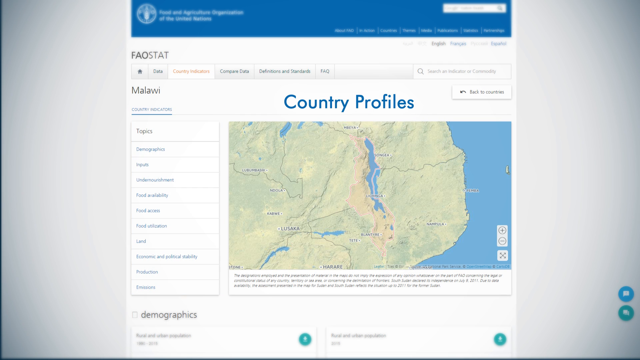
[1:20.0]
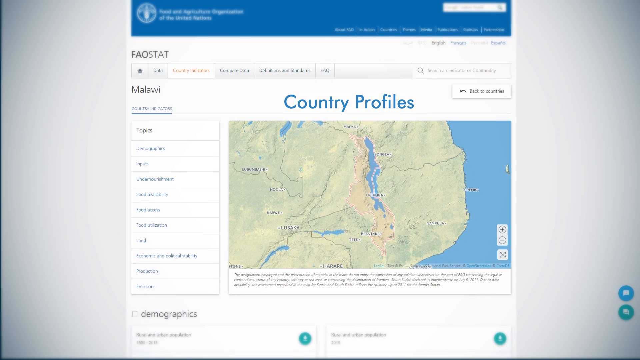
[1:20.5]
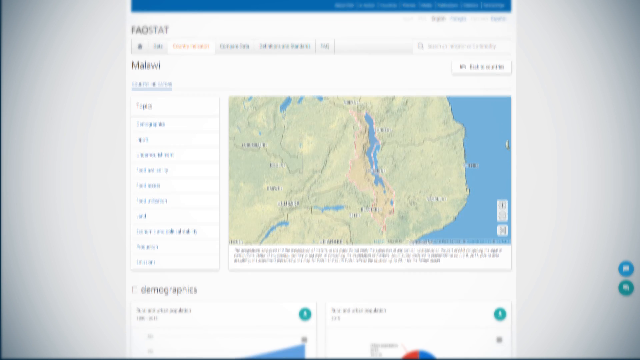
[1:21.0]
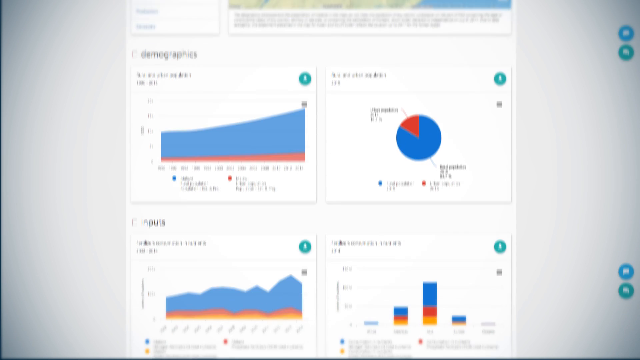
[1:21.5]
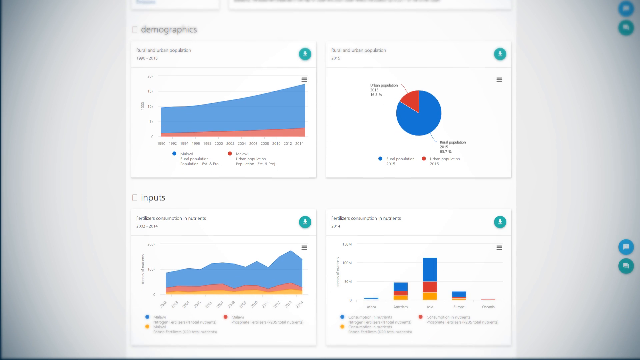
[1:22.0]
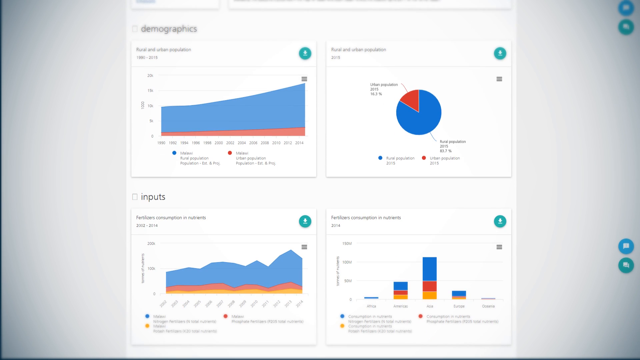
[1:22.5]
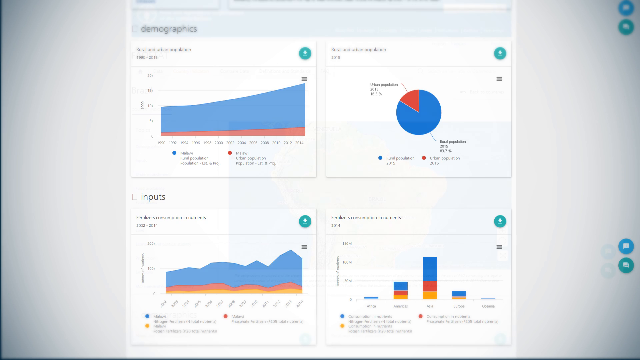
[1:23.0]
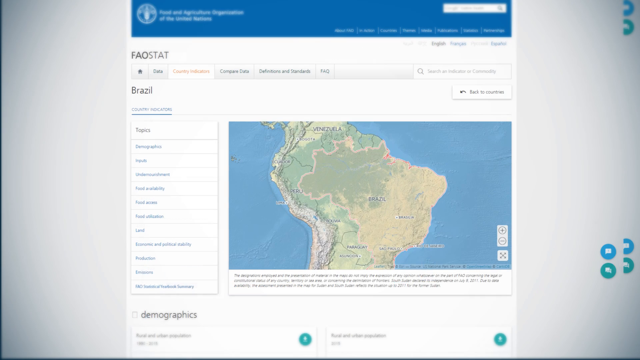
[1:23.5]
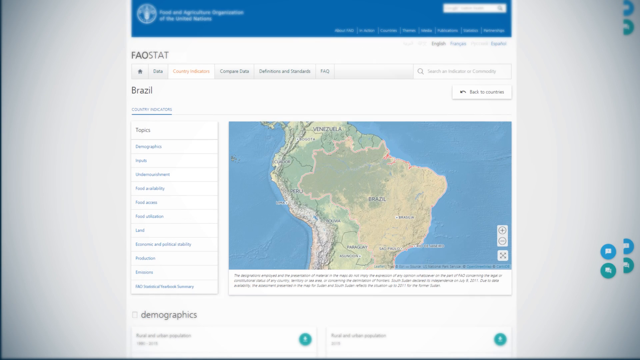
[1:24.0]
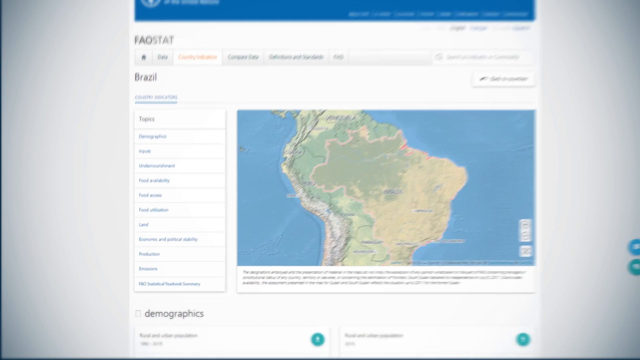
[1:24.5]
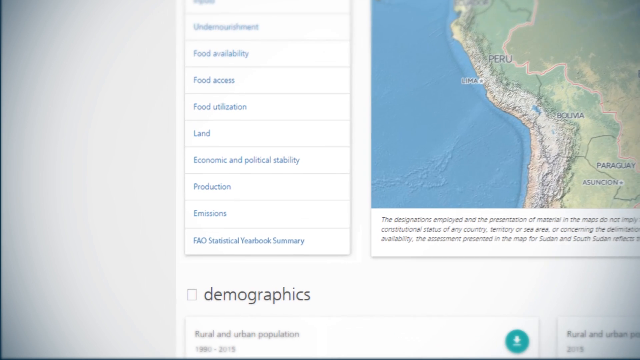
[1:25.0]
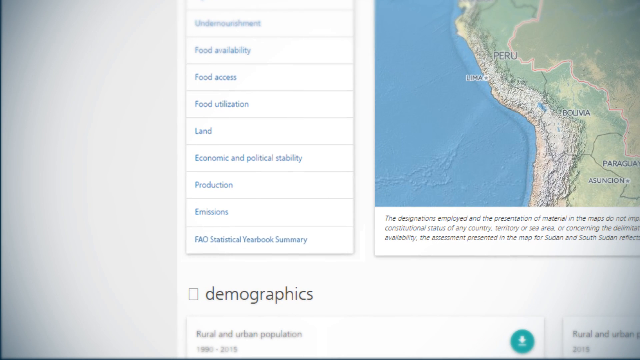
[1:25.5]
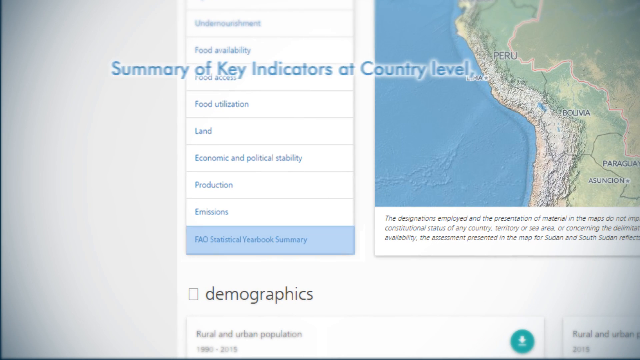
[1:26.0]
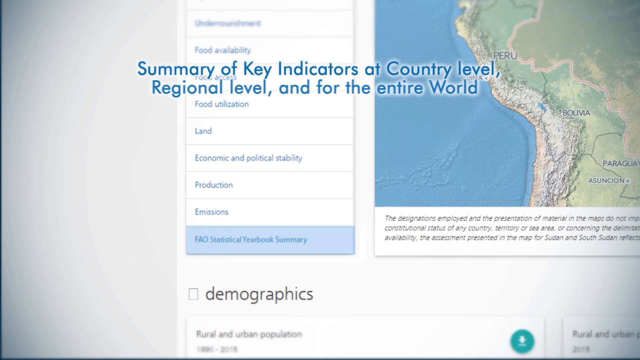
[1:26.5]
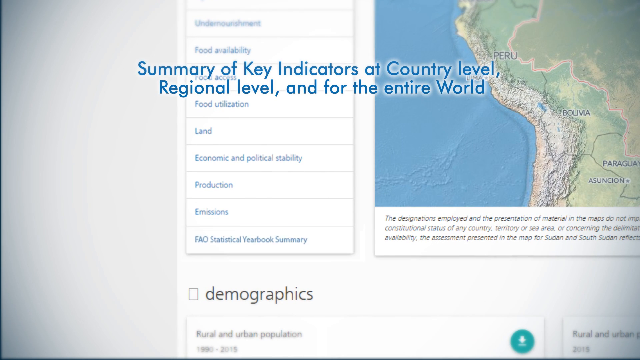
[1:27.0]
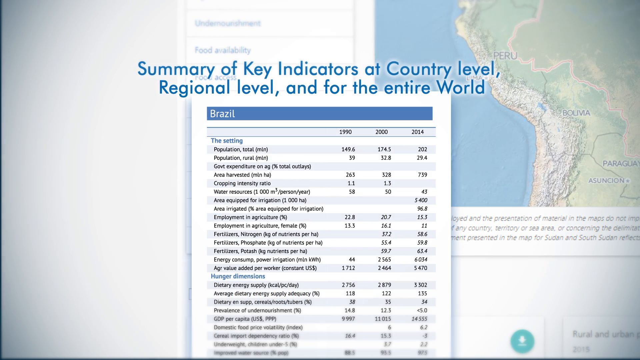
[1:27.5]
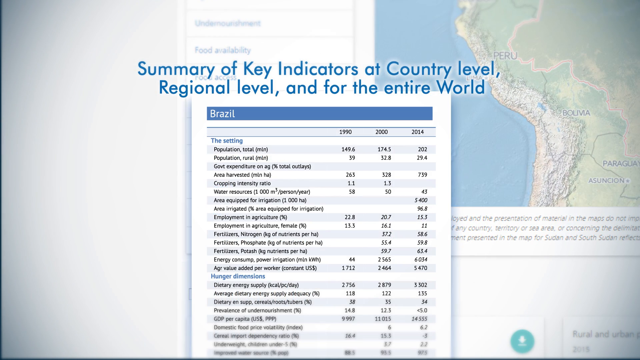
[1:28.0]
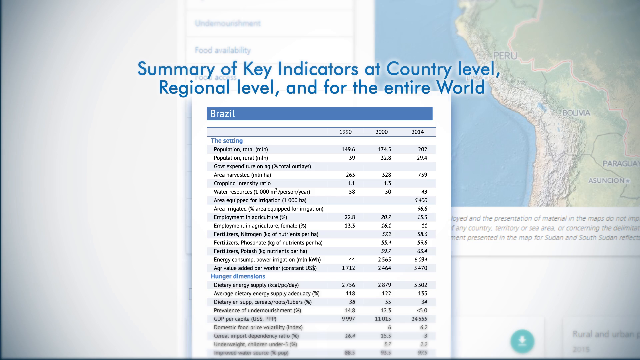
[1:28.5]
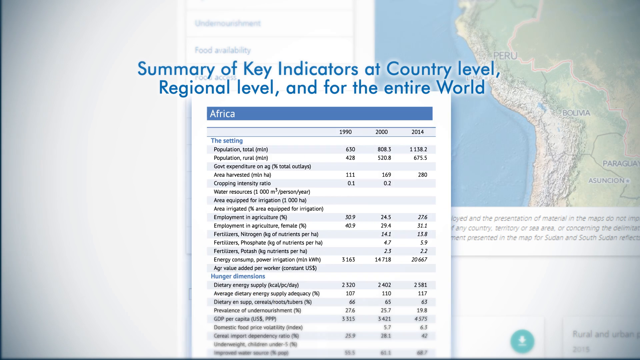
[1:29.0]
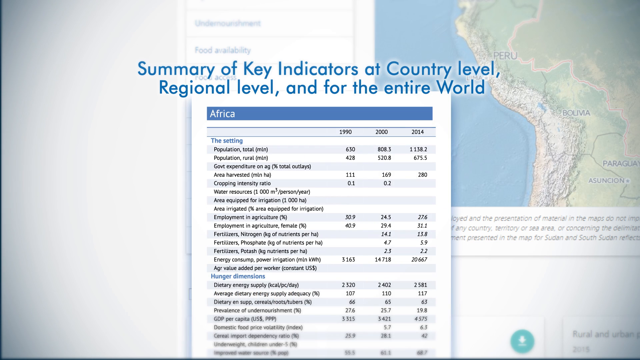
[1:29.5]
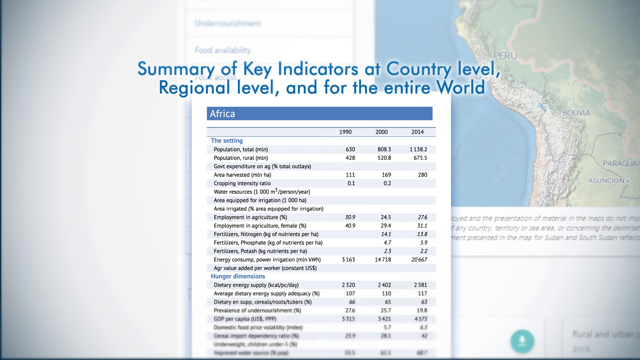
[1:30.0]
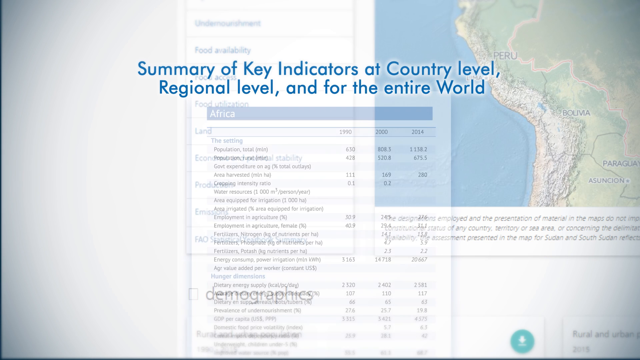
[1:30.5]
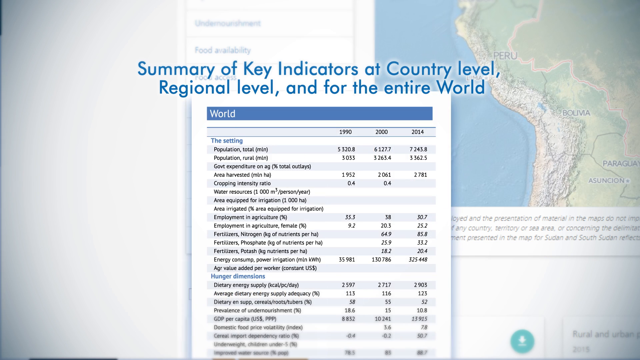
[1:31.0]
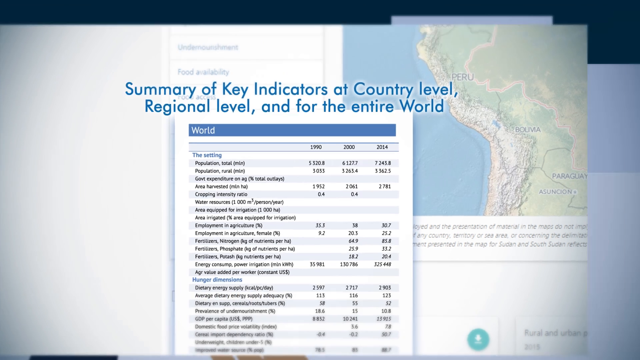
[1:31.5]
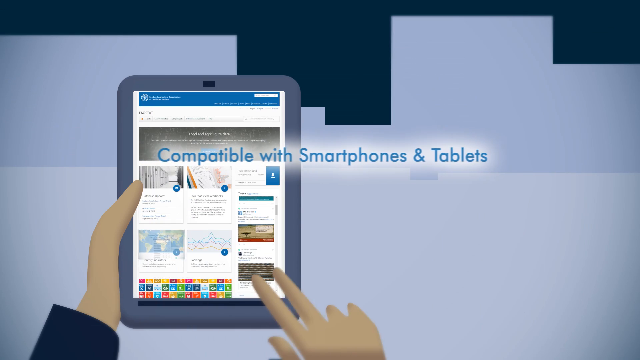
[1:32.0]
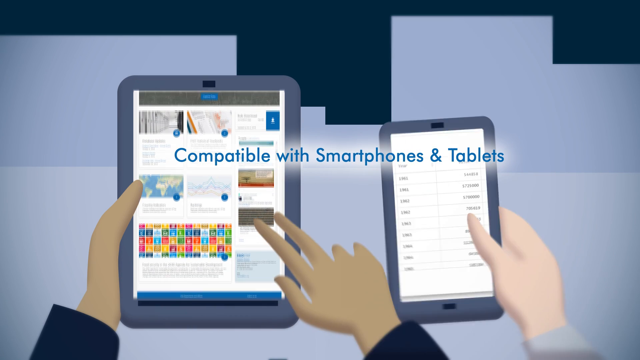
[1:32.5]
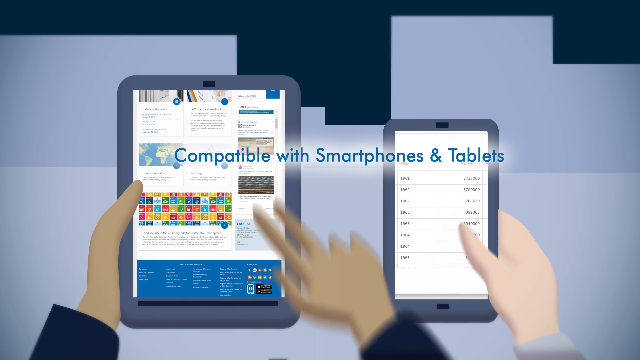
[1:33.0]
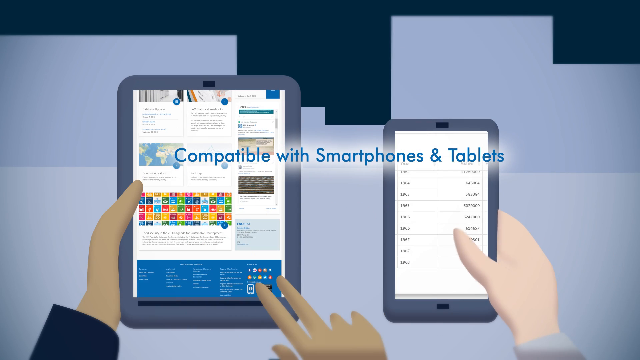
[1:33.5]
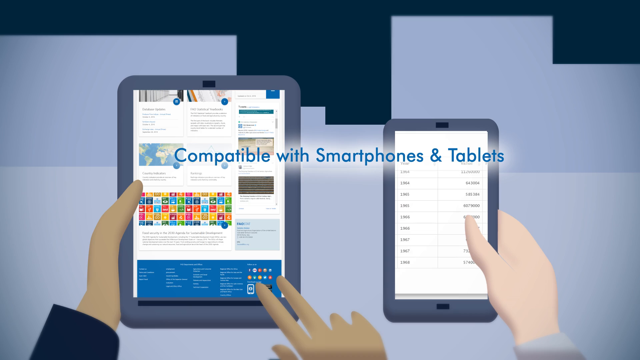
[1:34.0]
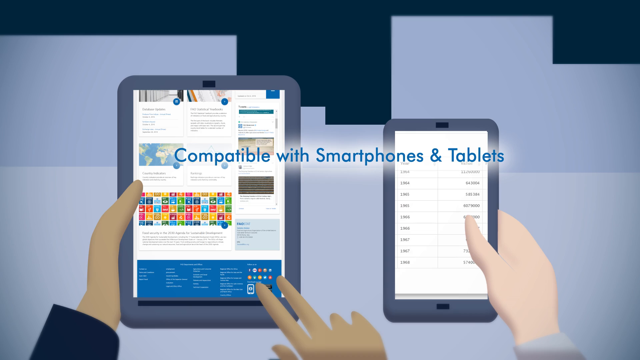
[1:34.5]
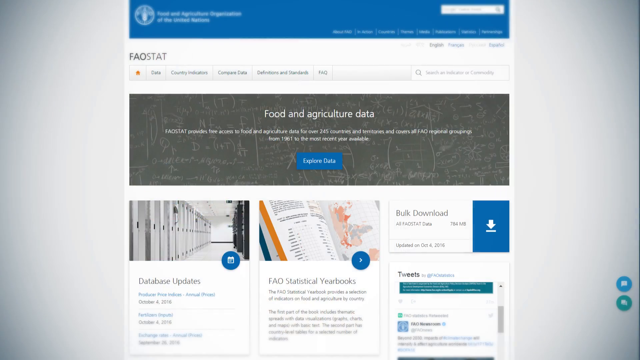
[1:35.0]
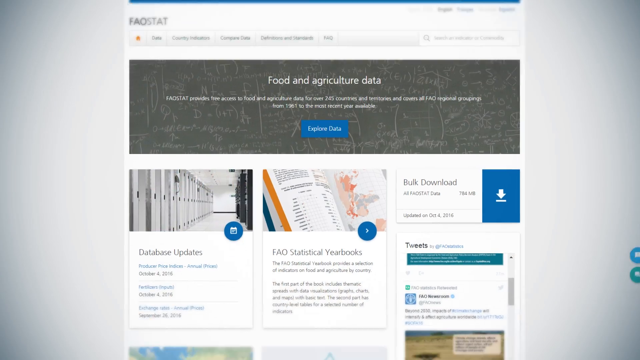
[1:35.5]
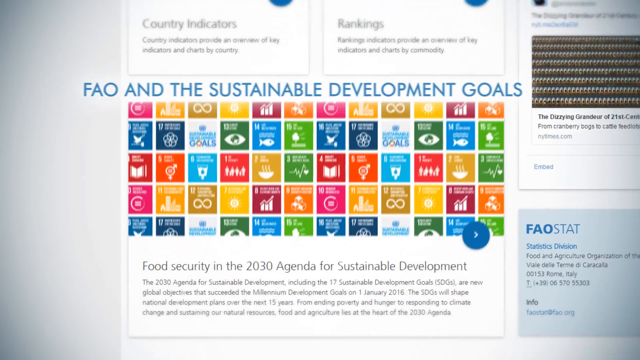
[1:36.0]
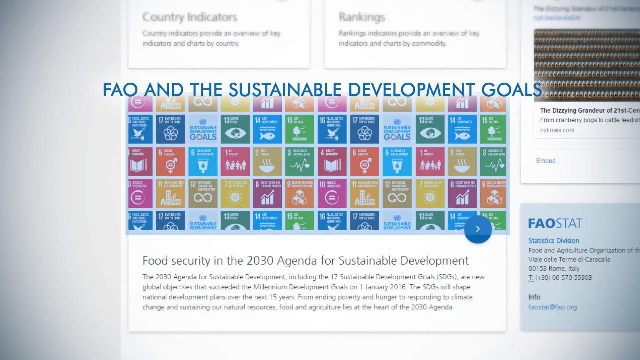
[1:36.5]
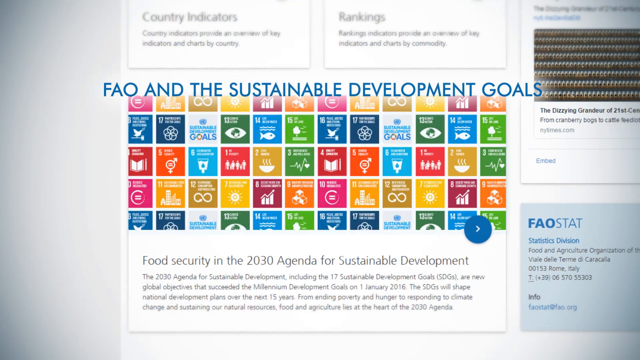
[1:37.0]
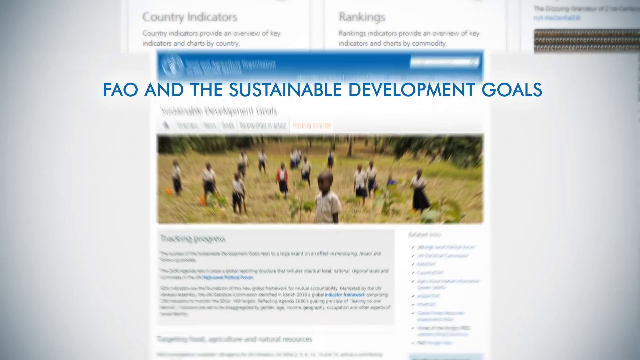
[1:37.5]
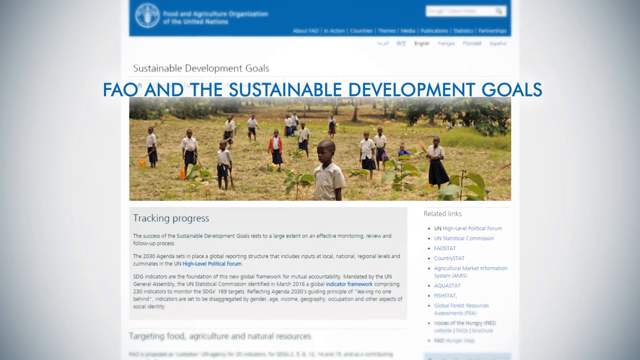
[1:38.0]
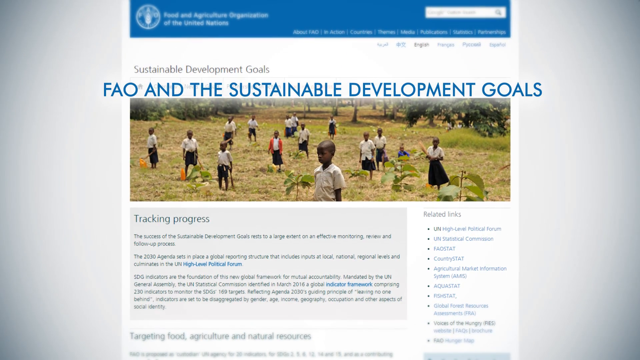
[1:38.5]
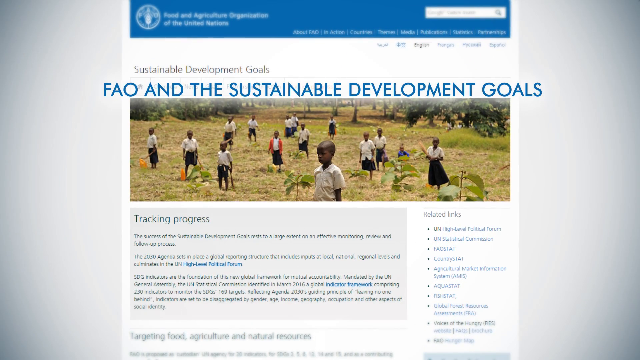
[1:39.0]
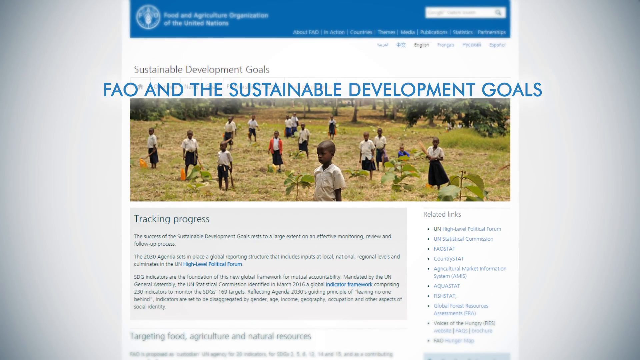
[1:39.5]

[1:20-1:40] Each country's profile is shown, with demographics, a pie chart and charts for the country, along with a summary of key indicators at country level, regional level and for the entire world. The data is shown as compatible with phones and tablets. A fact sheet on the Sustainable Development Goals for each country appears.